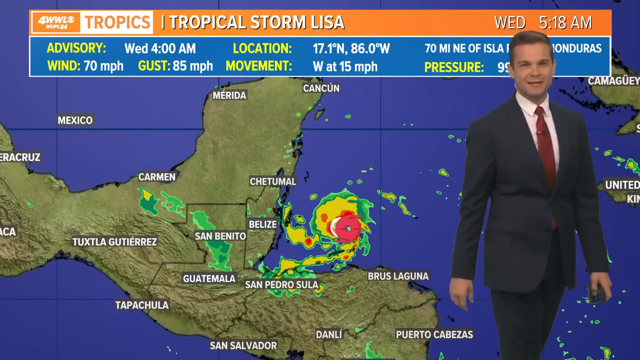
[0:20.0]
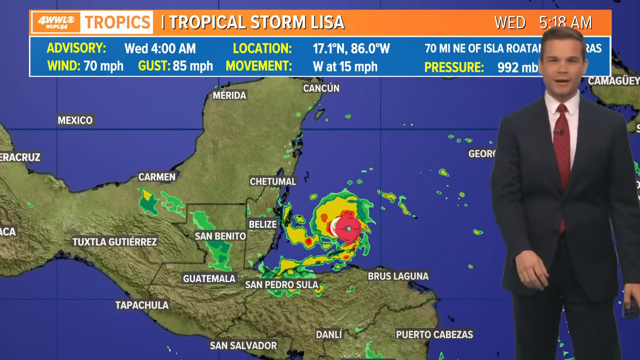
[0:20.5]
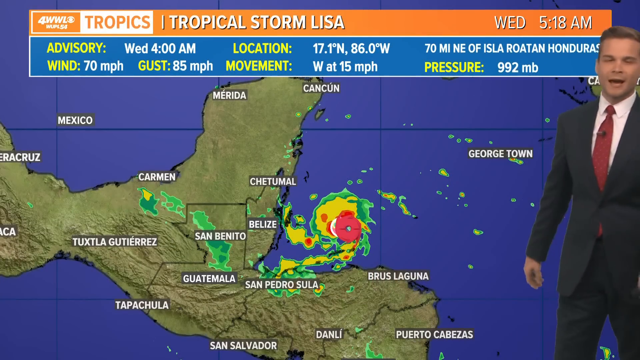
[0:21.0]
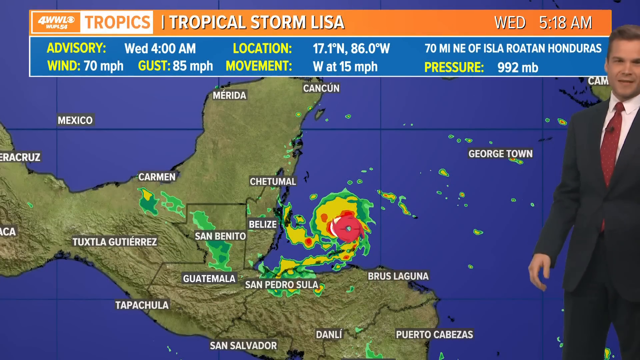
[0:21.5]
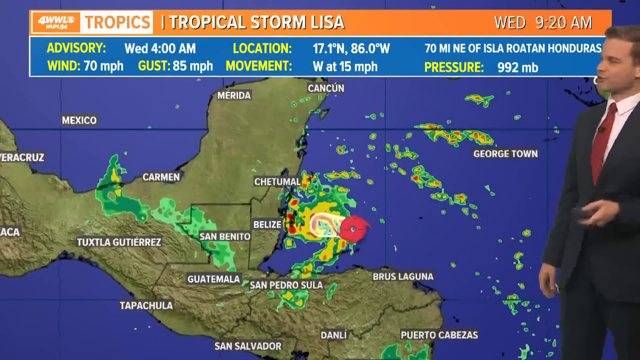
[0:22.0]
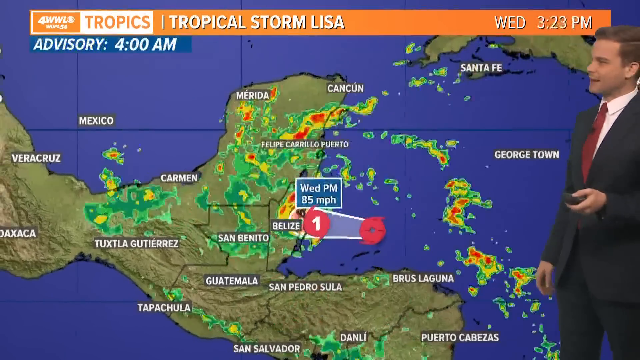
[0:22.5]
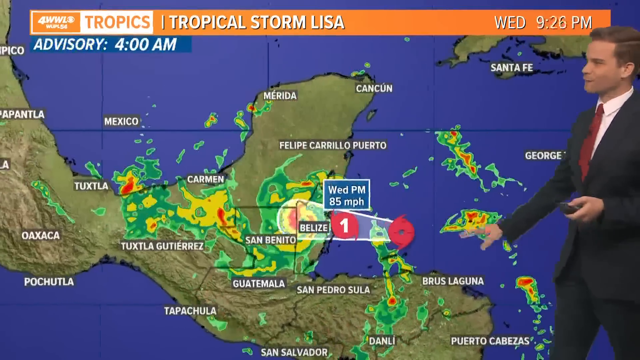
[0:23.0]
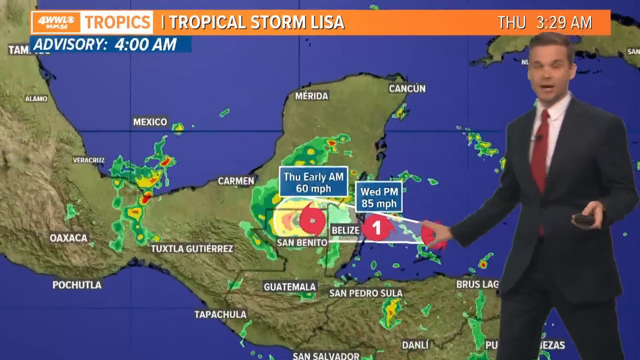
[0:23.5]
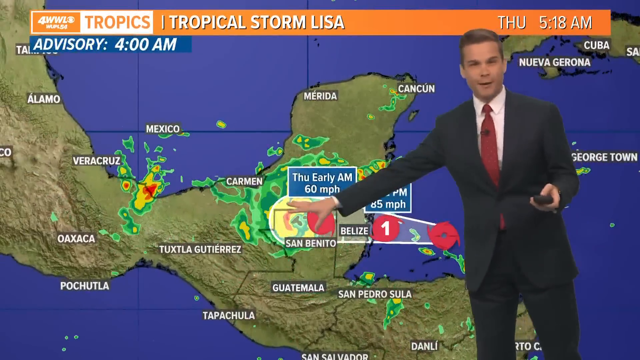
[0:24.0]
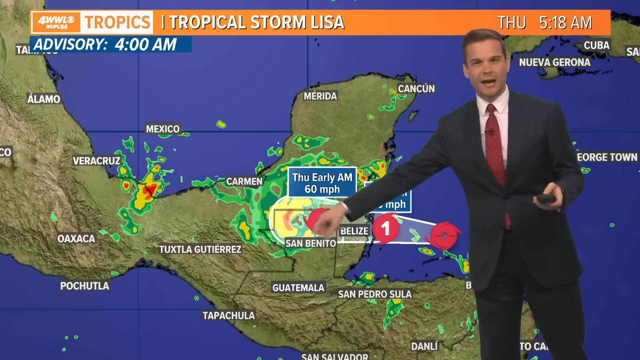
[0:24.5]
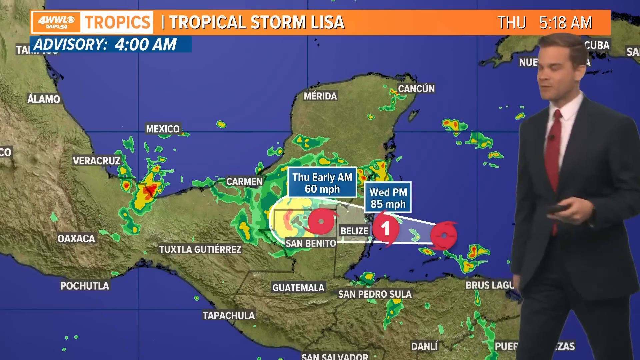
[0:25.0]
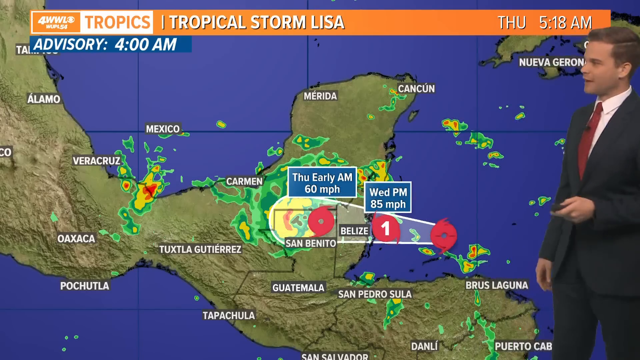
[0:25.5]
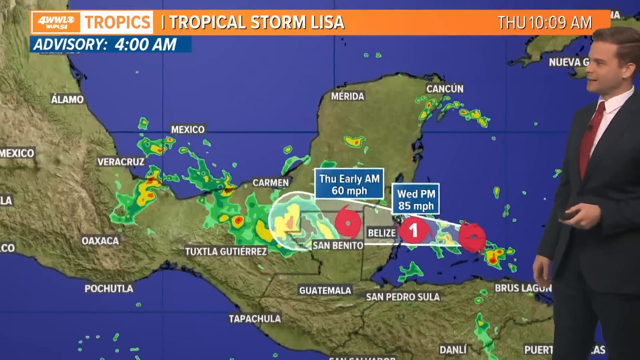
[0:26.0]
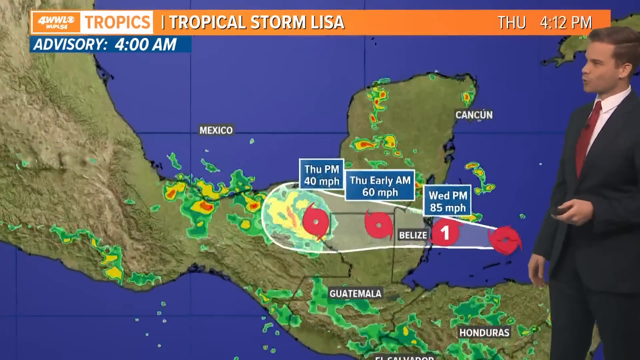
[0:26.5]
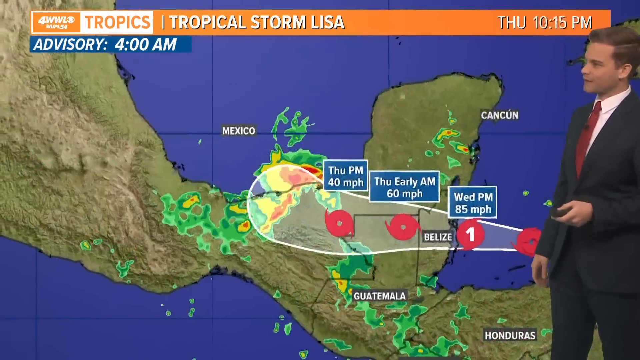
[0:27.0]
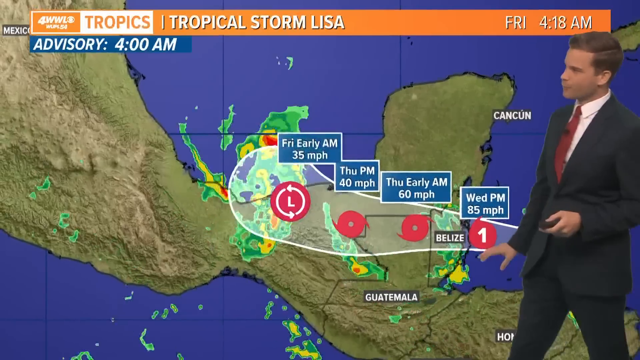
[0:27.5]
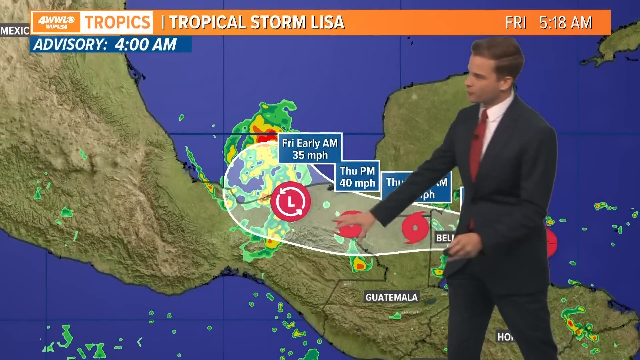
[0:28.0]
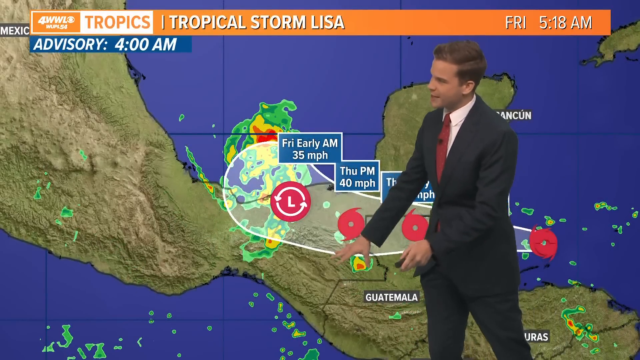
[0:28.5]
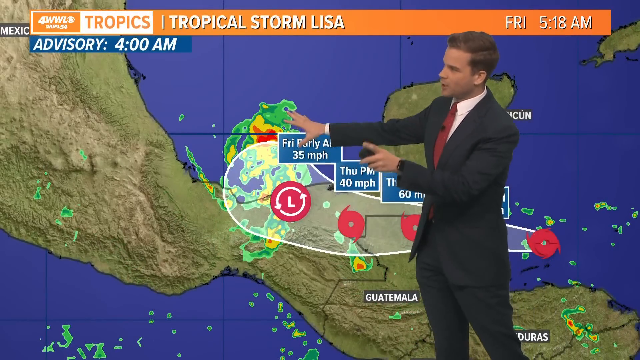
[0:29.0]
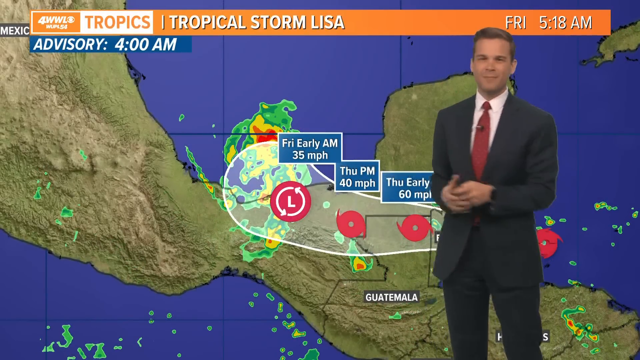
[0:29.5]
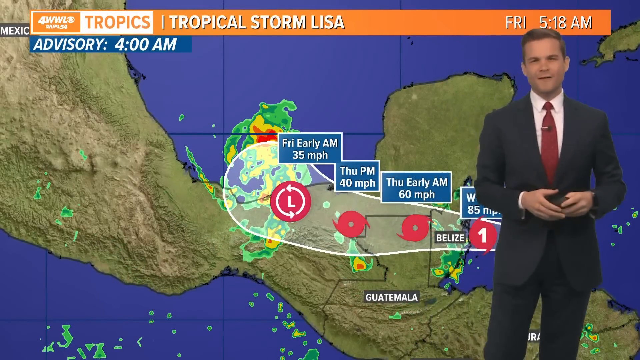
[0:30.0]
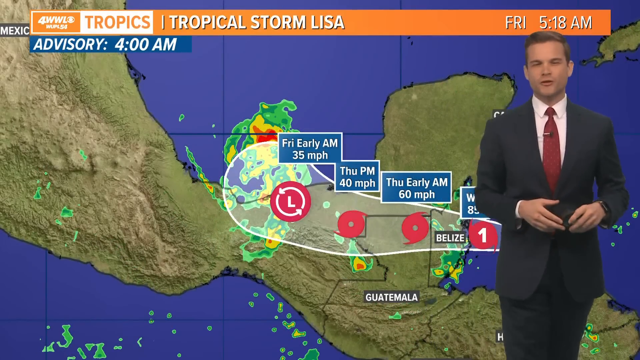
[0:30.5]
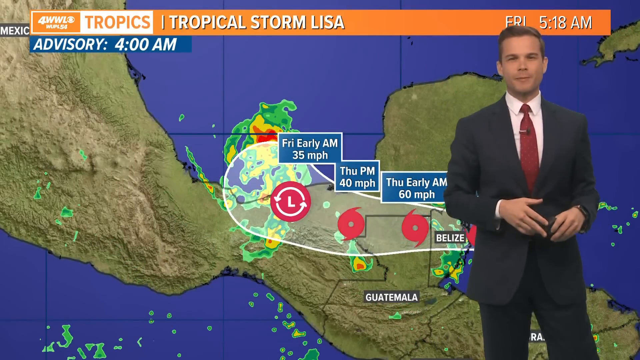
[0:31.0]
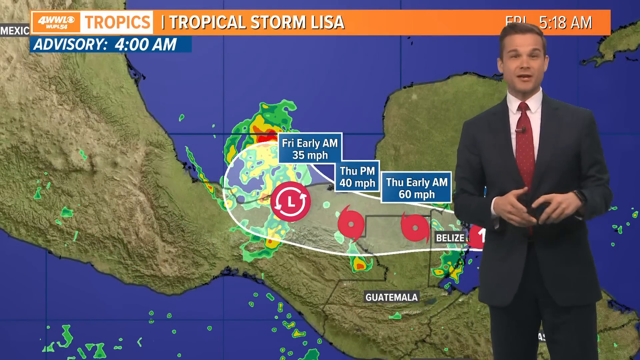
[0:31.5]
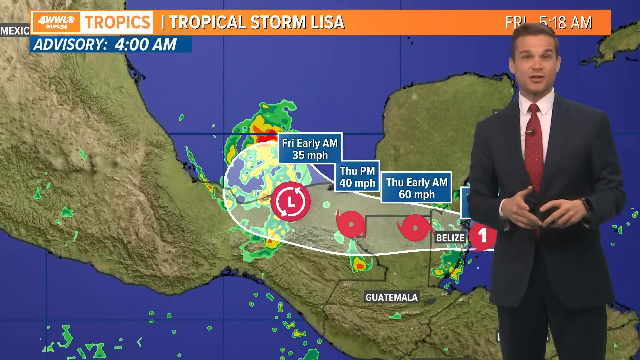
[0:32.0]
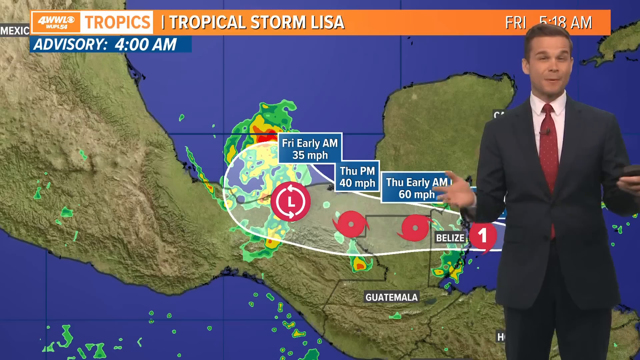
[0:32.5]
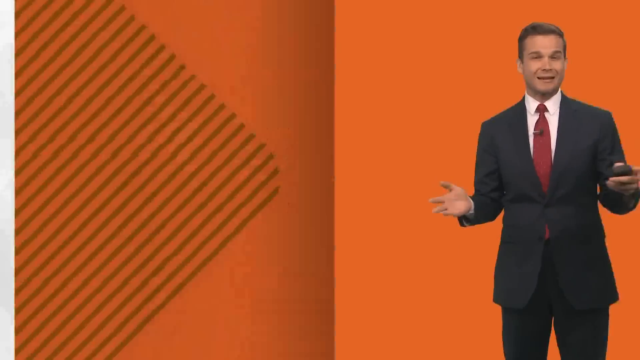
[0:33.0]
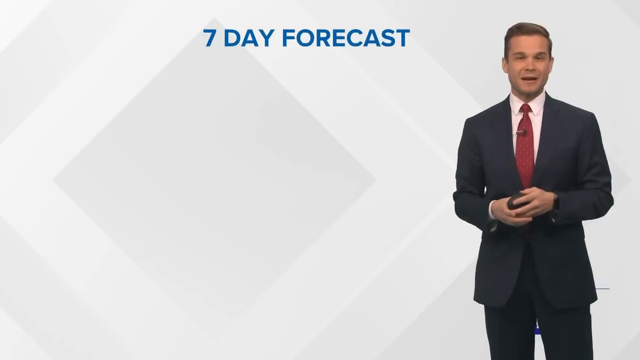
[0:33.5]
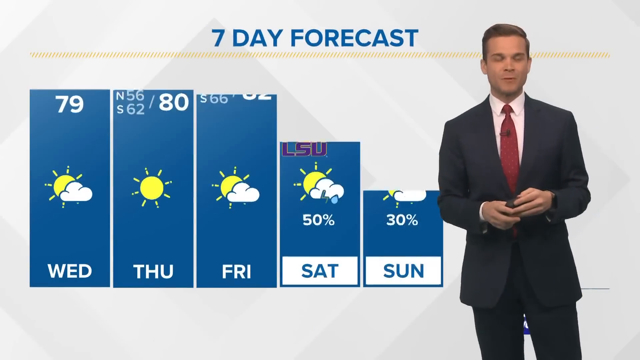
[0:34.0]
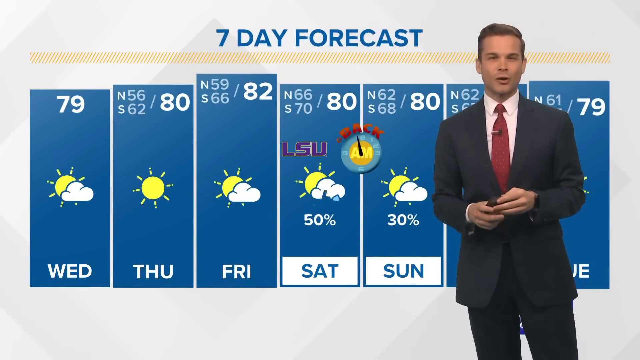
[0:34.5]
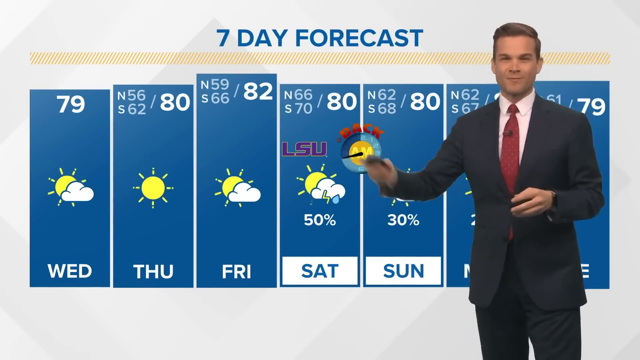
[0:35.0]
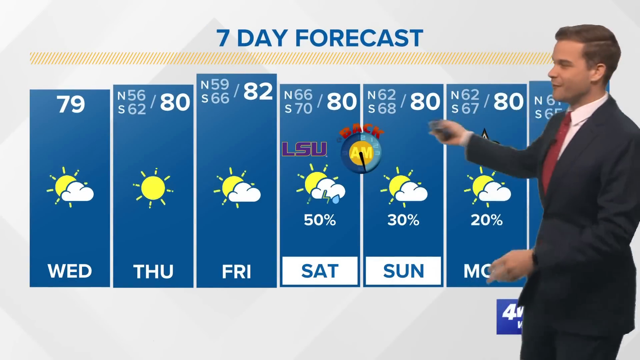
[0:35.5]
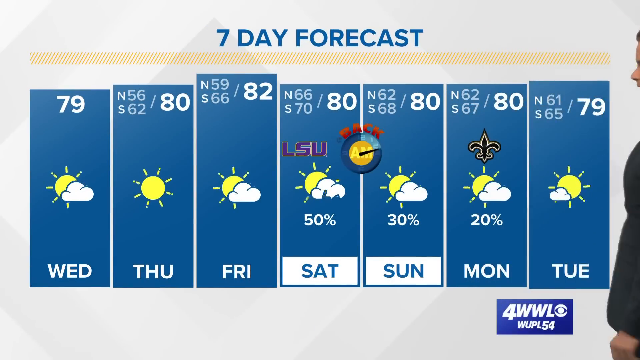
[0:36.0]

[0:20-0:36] The camera moves into a close-up of South America. A little of Mexico is visible on the left side, with the Gulf of Mexico above it and down off the right side. On the right edge, United Kingdom is visible, and San Pedro, Guatemala appears across the bottom. The man is still on the right side. Behind him, across the top, is a thin orange banner with the channel name, "Tropical Storm Lisa," the time and the day, and below it is information on the tropical storm. Just down from the center is a red circle surrounded by yellow and green, which is the tropical storm. He steps a little further to the right and hits the clicker, and the green and yellow move somewhat up and west. More information appears about the storm's miles per hour and what time it is about to hit. The storm moves further up toward Mexico, showing the different miles per hour and when it will reach certain areas of land. The view then cuts to an all-white background with "seven-day forecast" in blue across the top. The forecast runs from left to right: Wednesday, Thursday, Friday, Saturday, Sunday, Monday, Tuesday. Saturday and Sunday both have a white border around them. Temperatures run across the top, and the weather, such as cloudy or sunny, is in the middle. Saturday is marked with LSU, since that is when the game is played. The man then steps somewhat off to the right side of the screen.